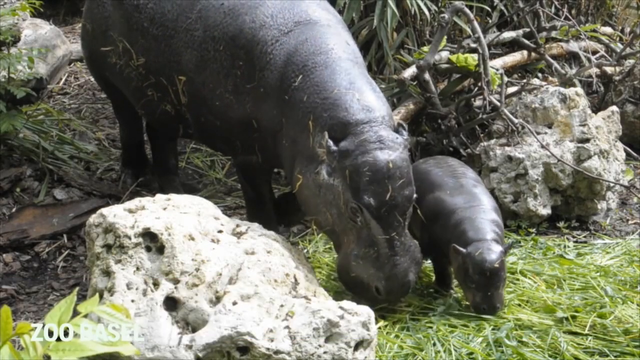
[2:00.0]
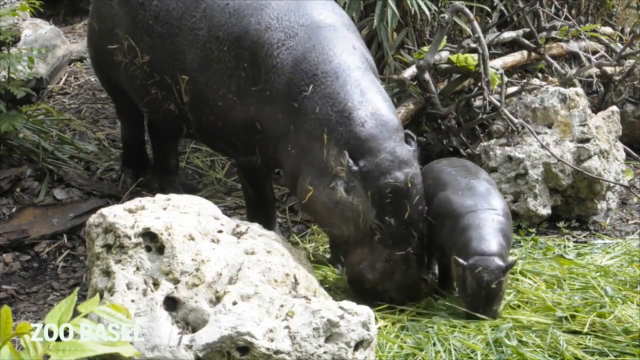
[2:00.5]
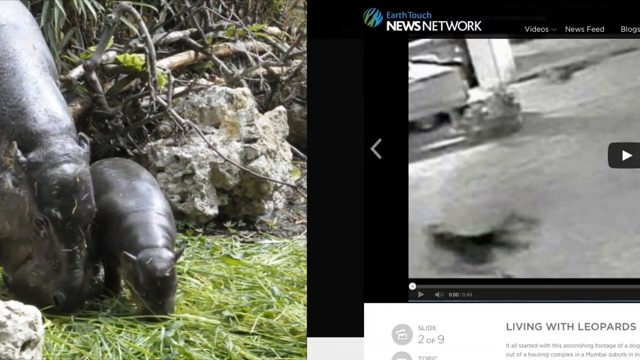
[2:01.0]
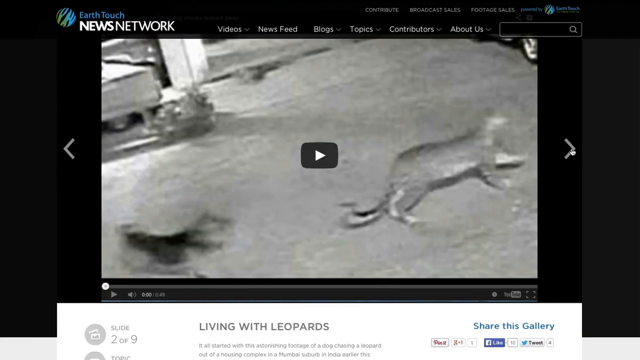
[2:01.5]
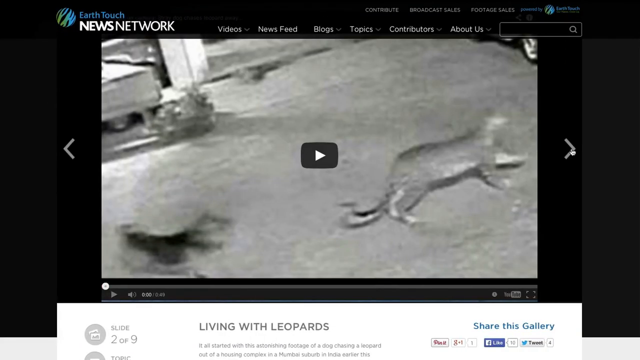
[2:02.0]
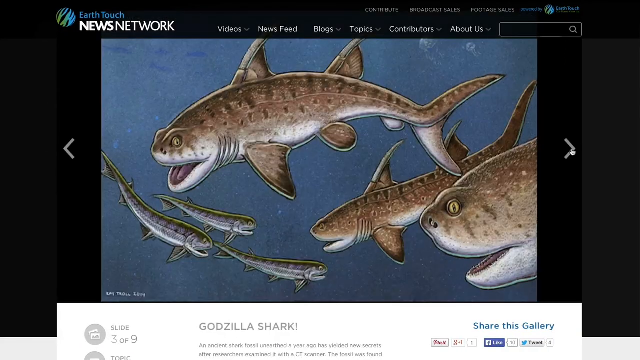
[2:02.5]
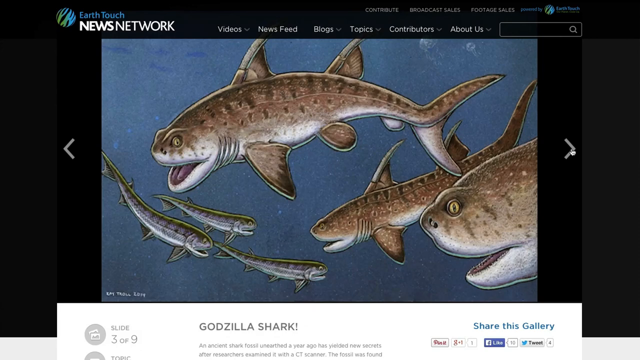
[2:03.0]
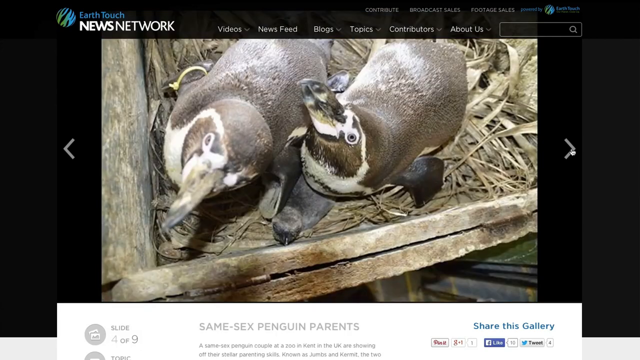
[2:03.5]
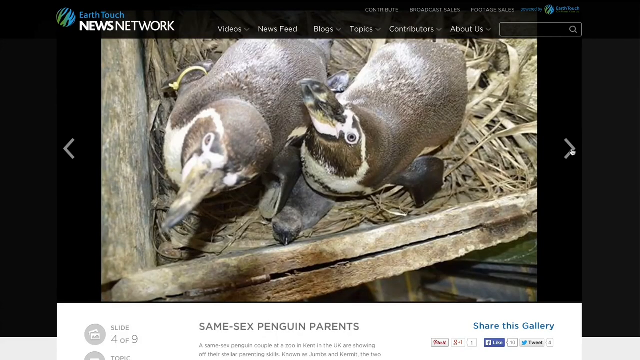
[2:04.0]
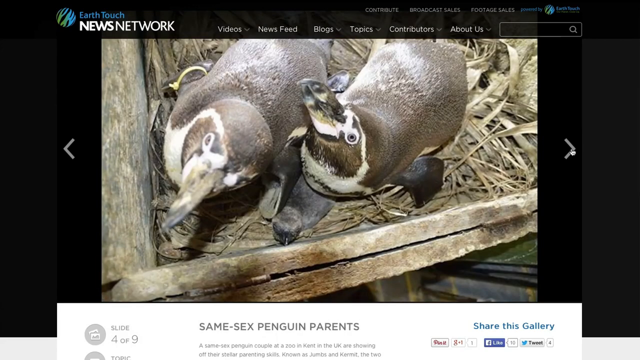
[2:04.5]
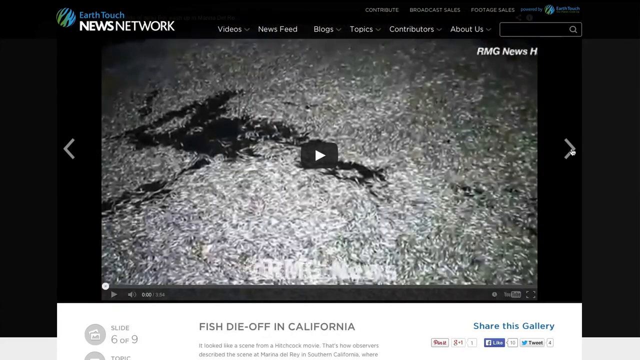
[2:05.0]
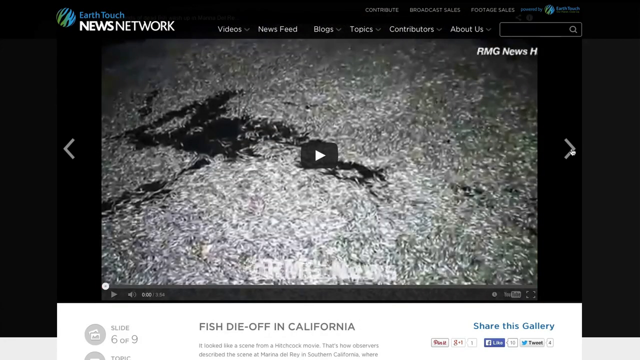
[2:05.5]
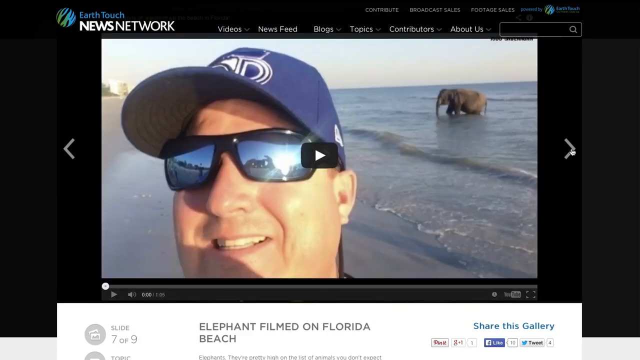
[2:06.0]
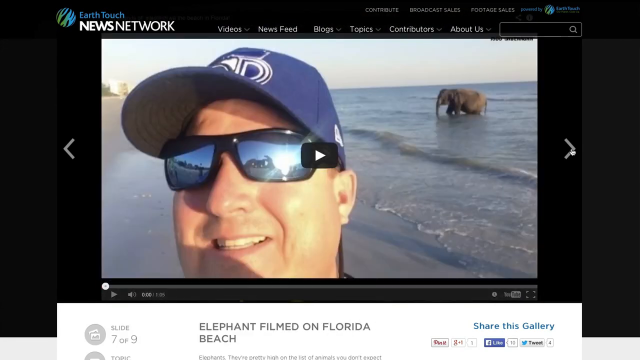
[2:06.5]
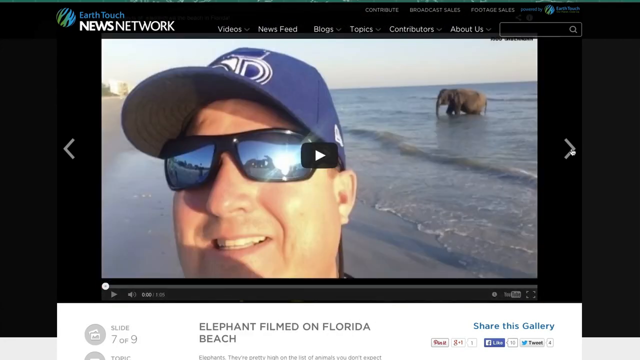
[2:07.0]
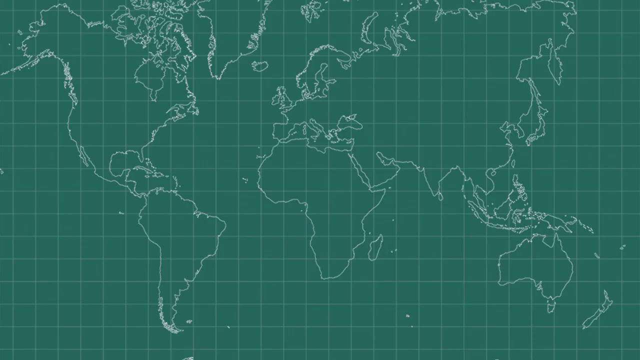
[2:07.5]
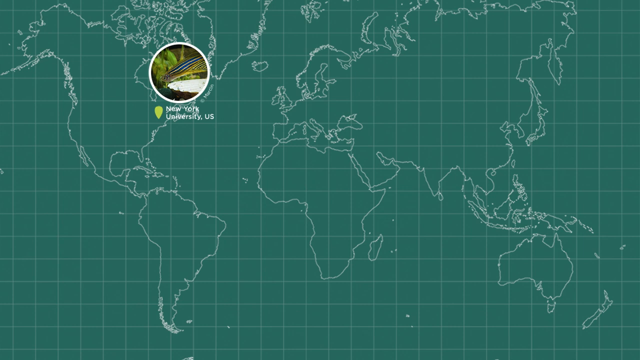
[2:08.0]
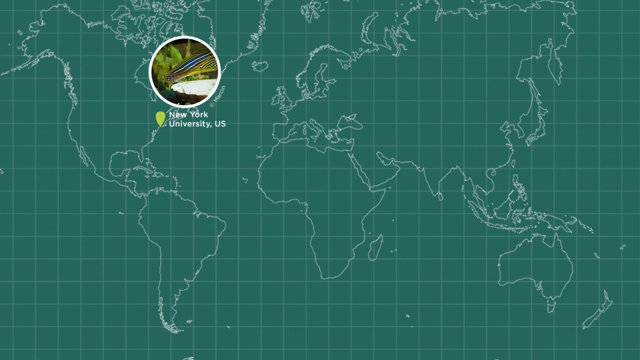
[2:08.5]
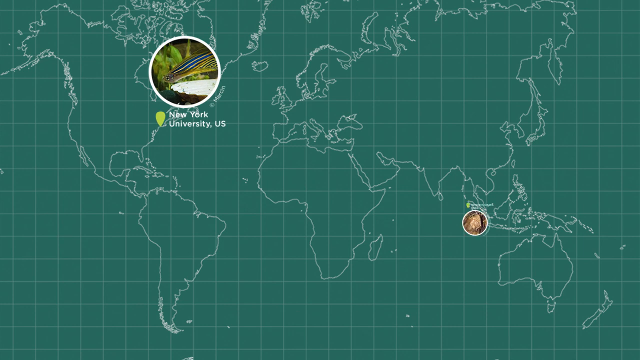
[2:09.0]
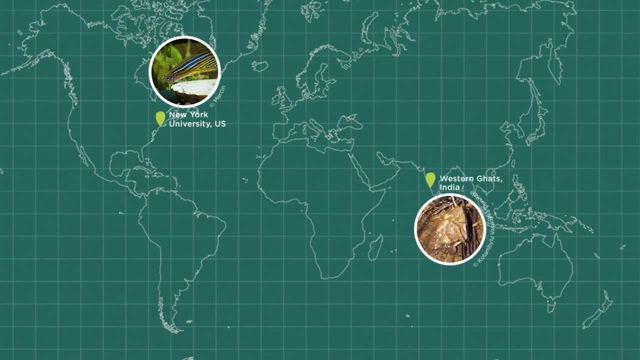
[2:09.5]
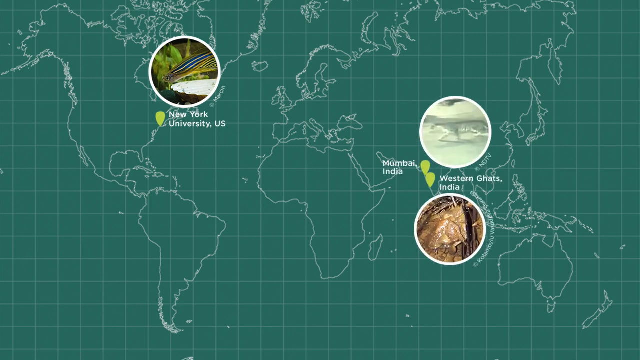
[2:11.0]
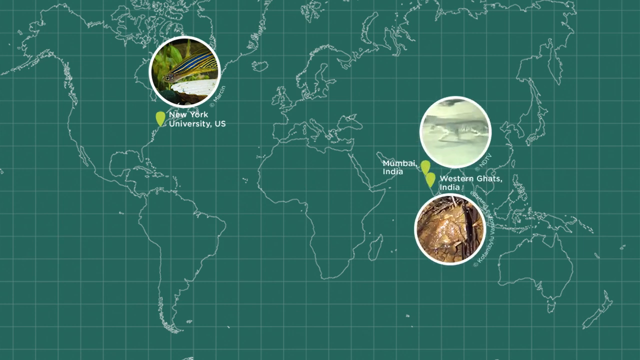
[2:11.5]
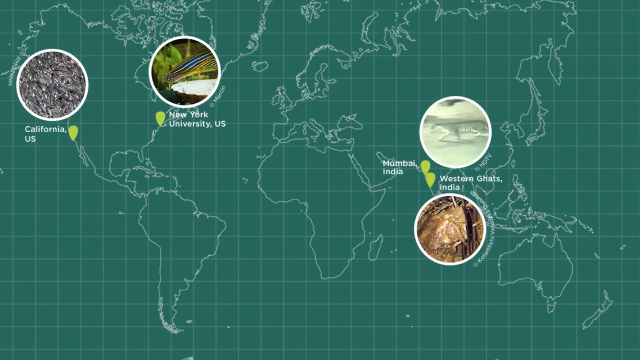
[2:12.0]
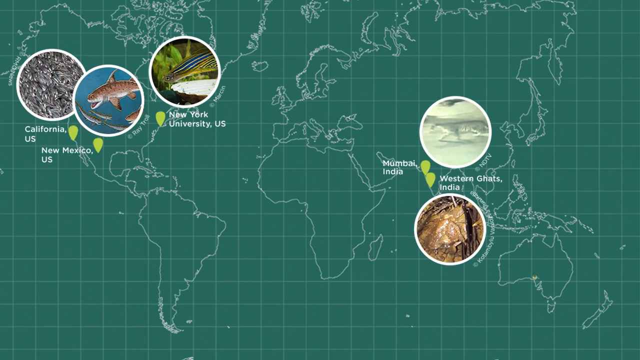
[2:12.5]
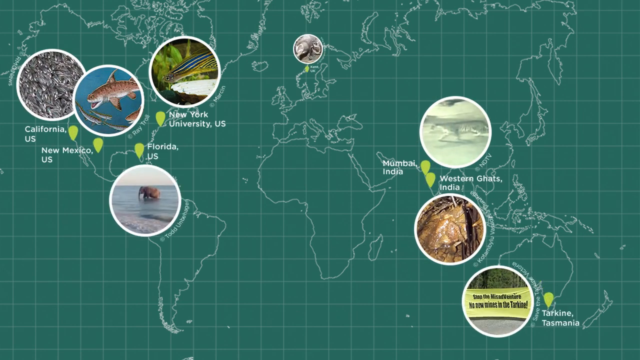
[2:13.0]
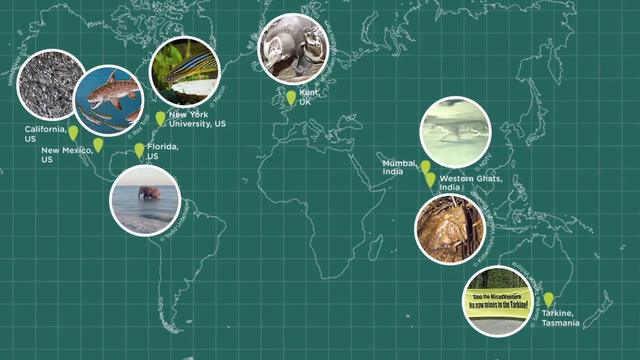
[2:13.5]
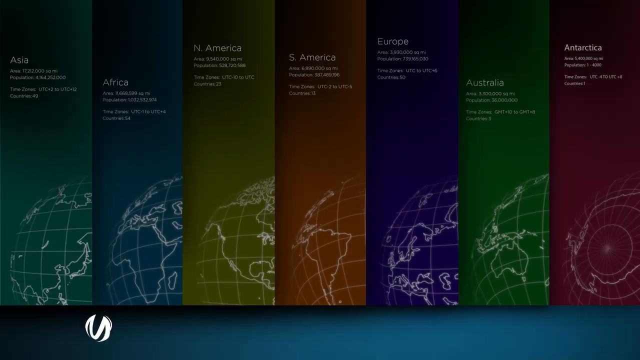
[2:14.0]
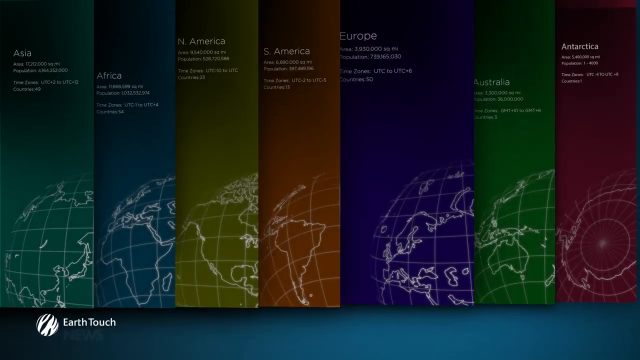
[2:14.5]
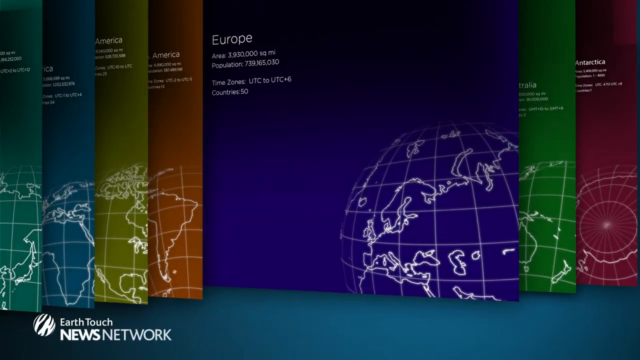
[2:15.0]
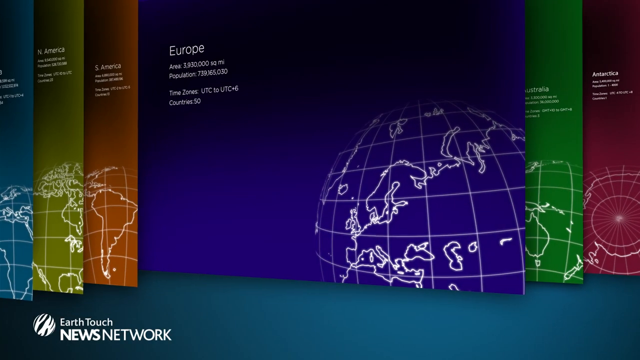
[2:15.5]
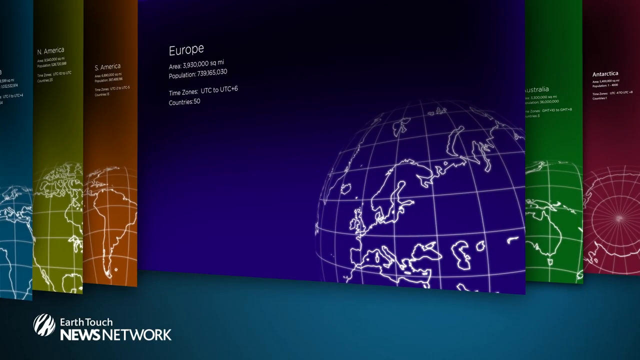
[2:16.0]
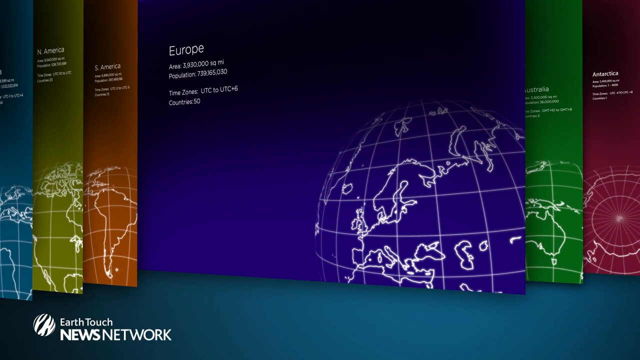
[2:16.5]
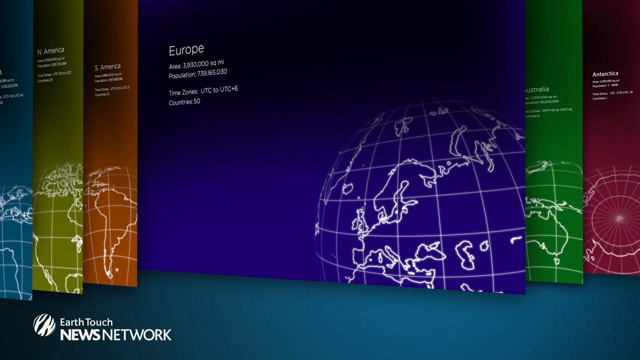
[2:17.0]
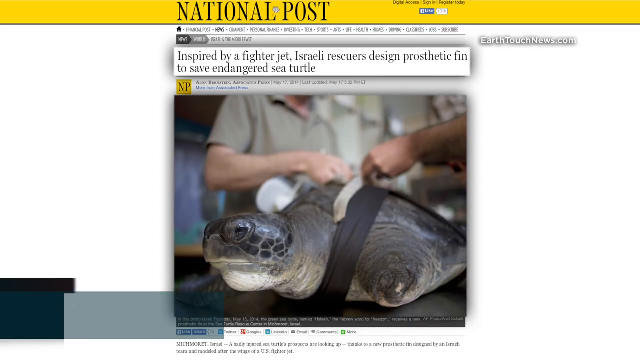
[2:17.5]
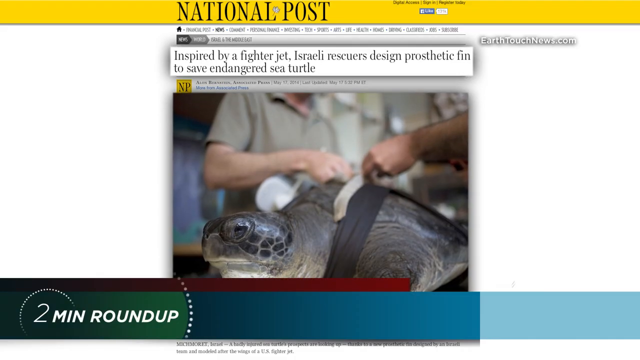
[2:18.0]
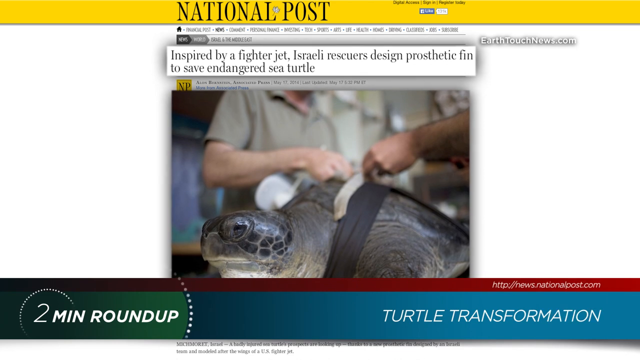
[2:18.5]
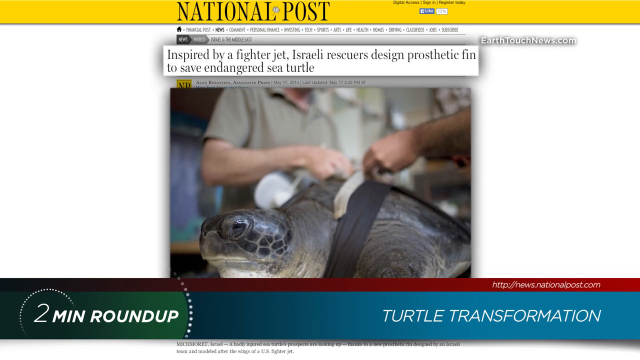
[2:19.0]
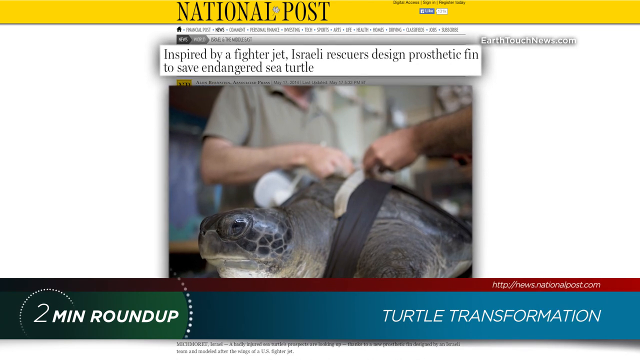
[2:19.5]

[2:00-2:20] Two hippos are shown: one is a baby hippo and one appears to be an adult. Both appear to be eating some sort of grass or hay out of water, in some sort of wetland area with different rocks and trees around them. The video cuts to a video from Earth Touch News Network showing different pictures of animals: two penguins lying together in some sort of enclosure or bin, and an animated picture of fish in the sea. Next there appears to be a man in a blue hat with sunglasses on, with an elephant behind him in the ocean. A world map follows, pinpointing New York University, then western India, then another part of India, California, New Mexico, and Florida. Each pinpointed area has a circle, and inside the circle is some sort of animal that might be highlighted in that area.